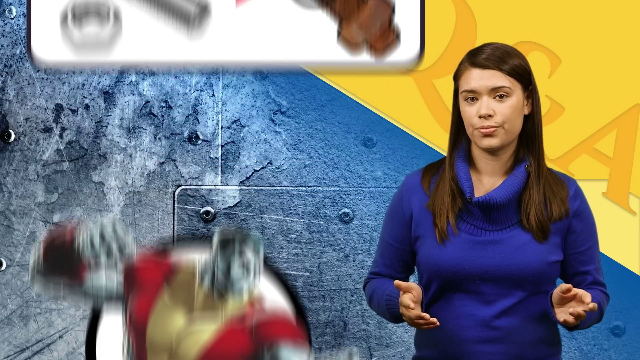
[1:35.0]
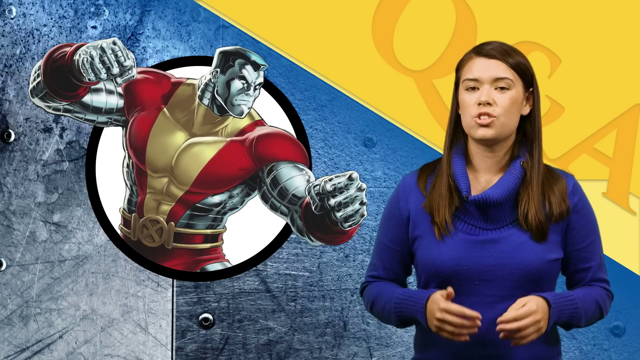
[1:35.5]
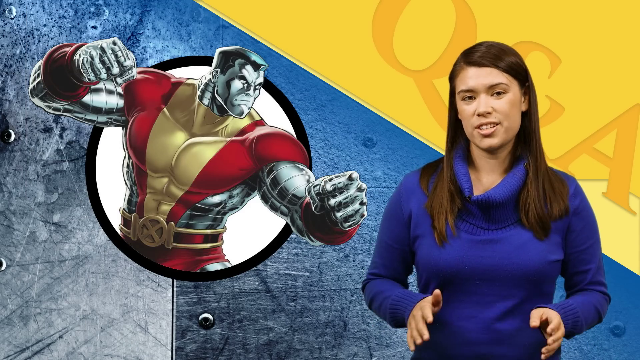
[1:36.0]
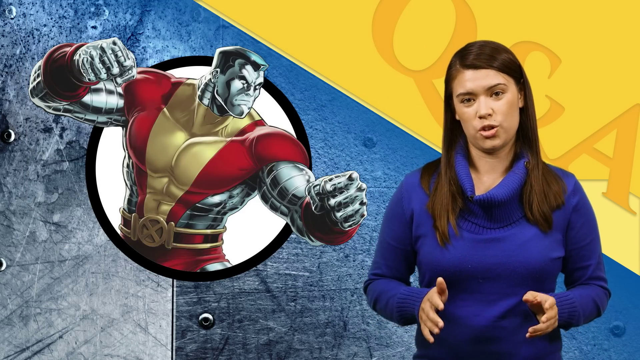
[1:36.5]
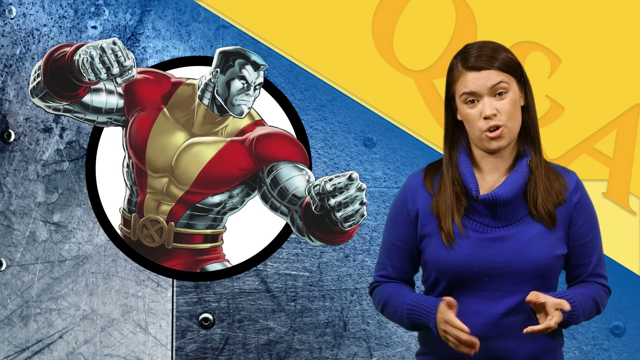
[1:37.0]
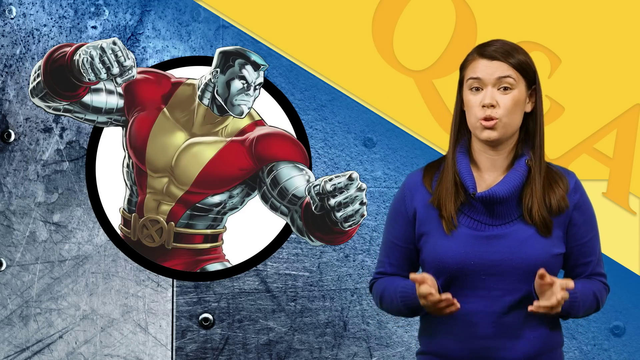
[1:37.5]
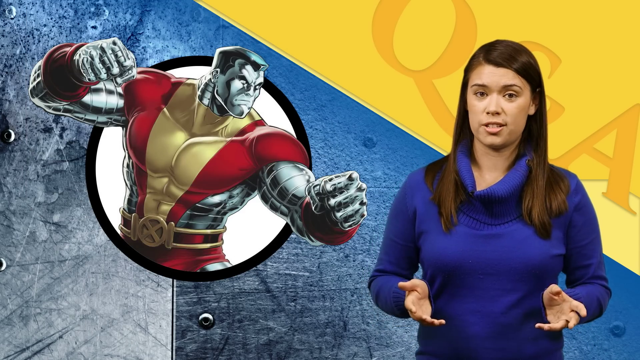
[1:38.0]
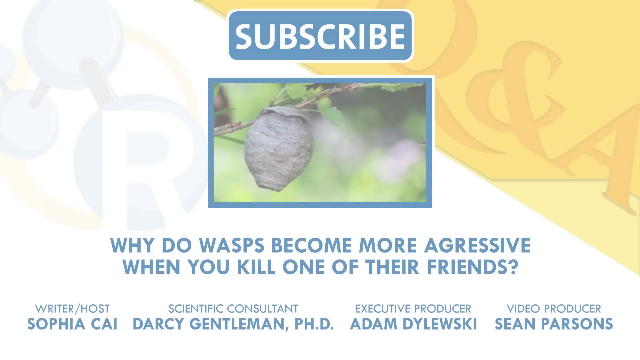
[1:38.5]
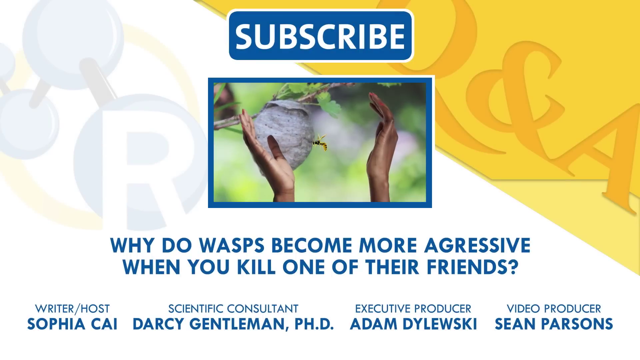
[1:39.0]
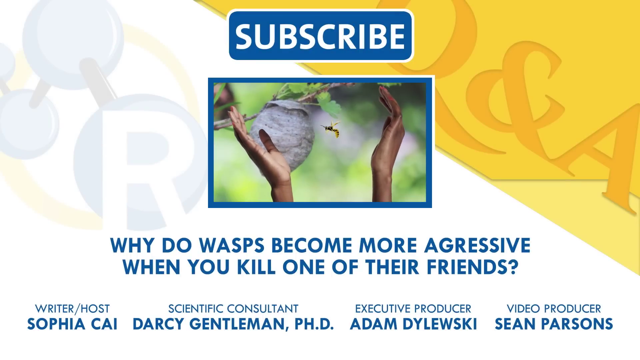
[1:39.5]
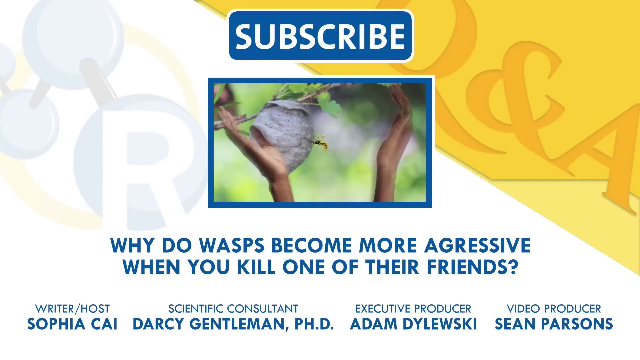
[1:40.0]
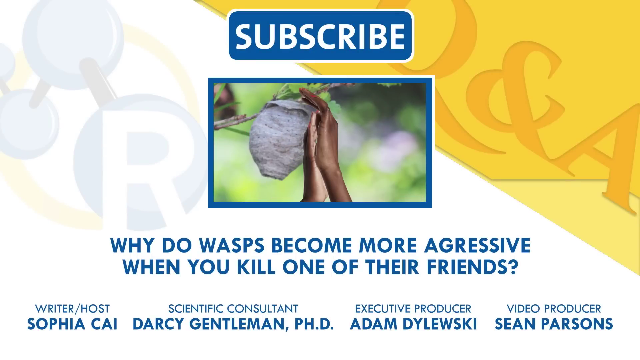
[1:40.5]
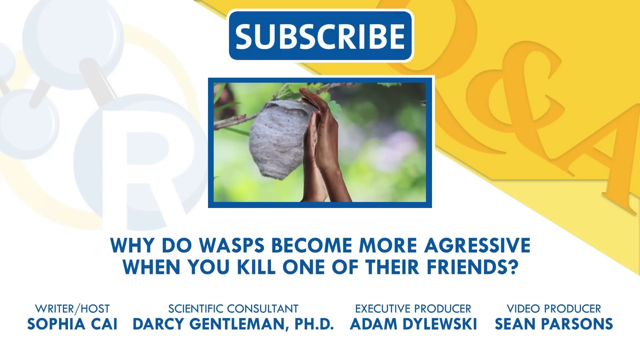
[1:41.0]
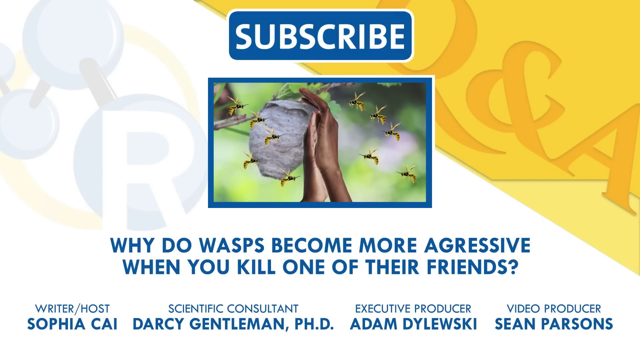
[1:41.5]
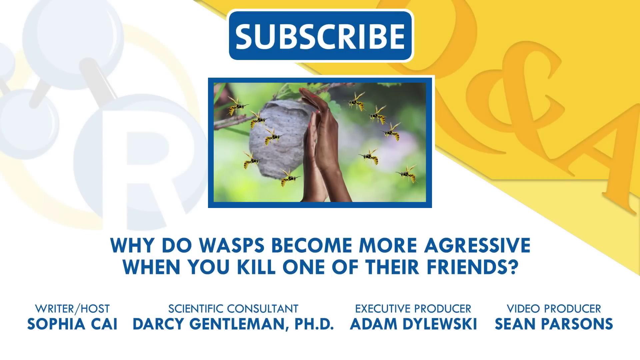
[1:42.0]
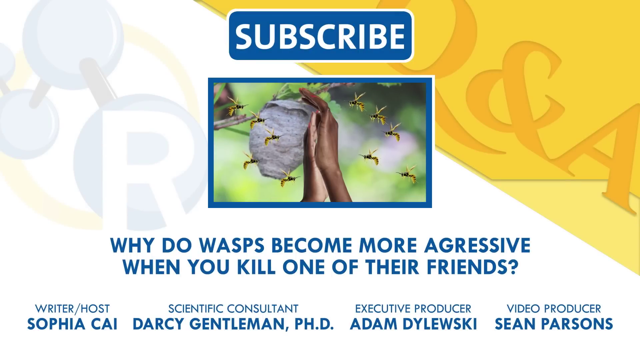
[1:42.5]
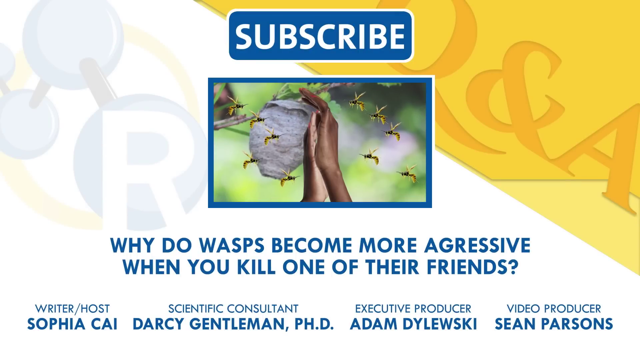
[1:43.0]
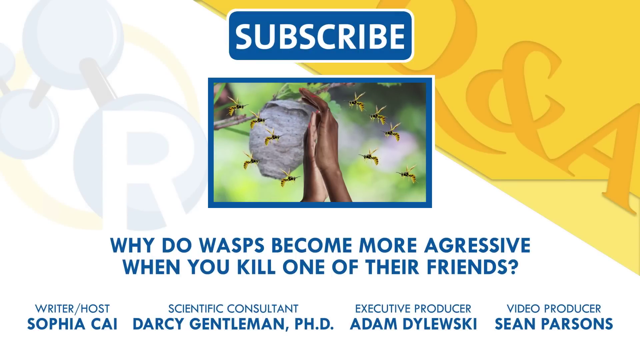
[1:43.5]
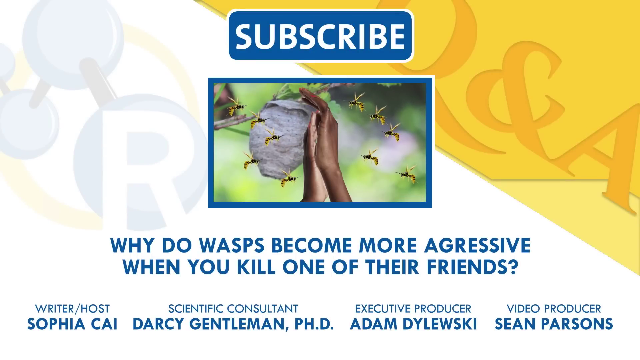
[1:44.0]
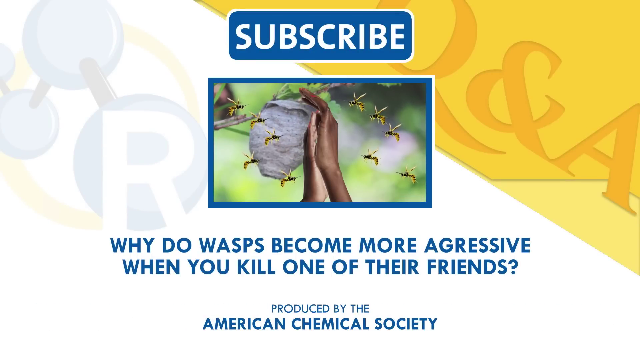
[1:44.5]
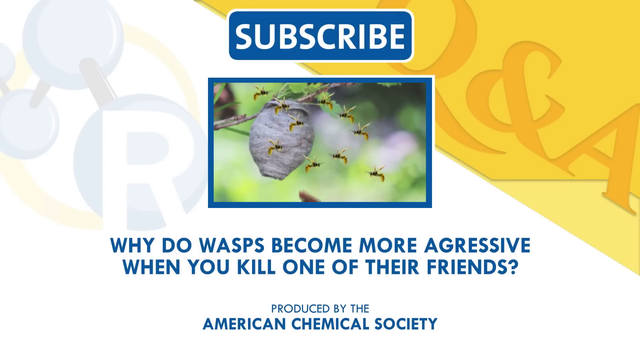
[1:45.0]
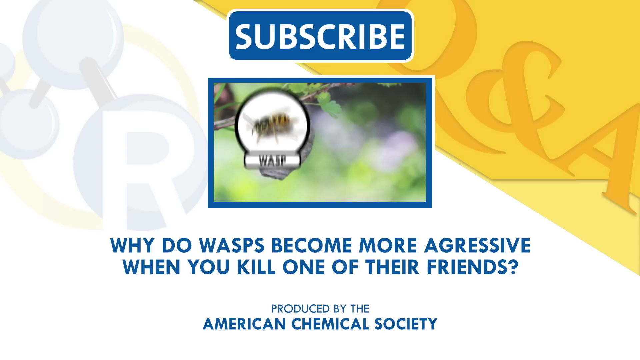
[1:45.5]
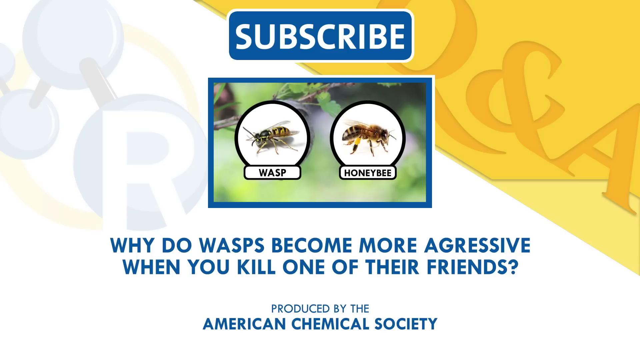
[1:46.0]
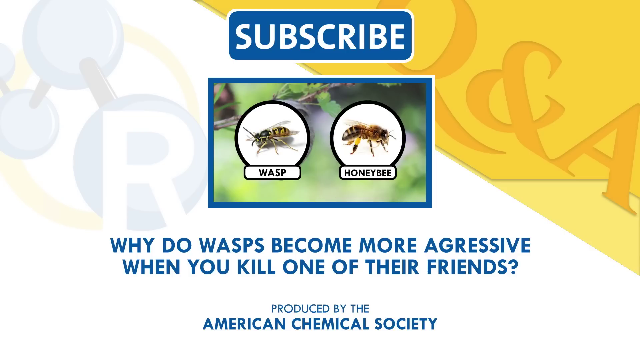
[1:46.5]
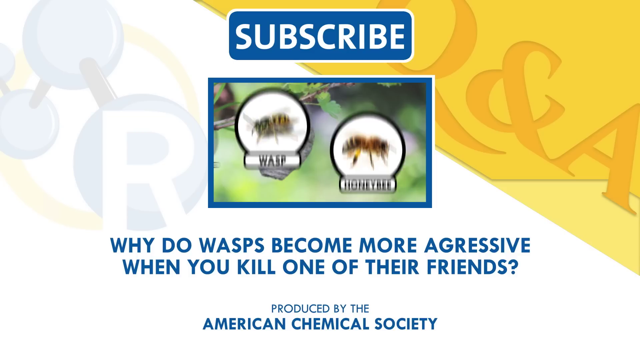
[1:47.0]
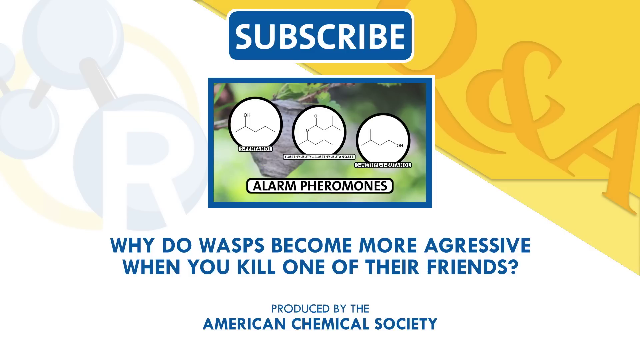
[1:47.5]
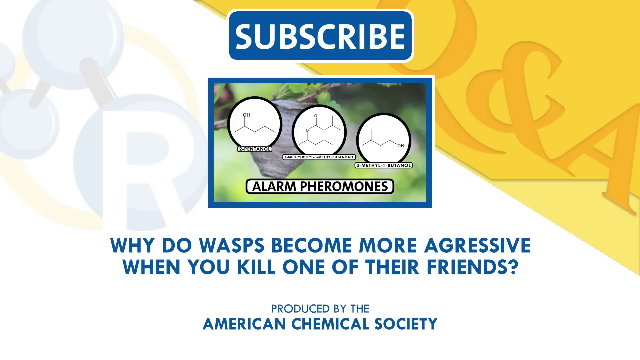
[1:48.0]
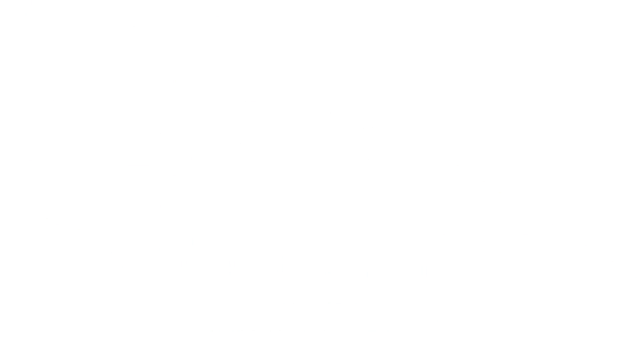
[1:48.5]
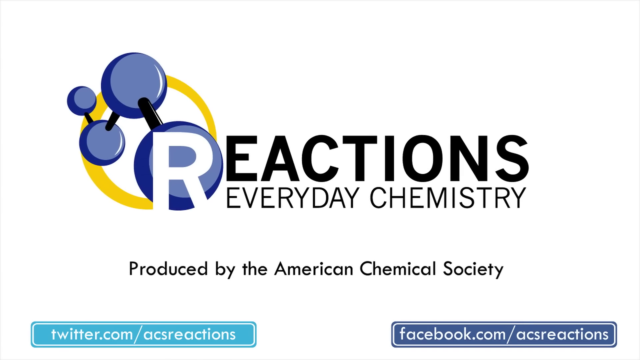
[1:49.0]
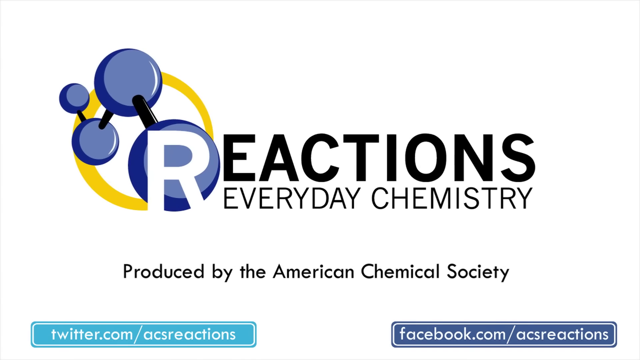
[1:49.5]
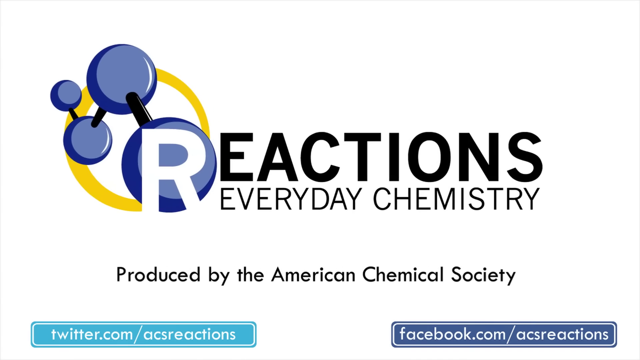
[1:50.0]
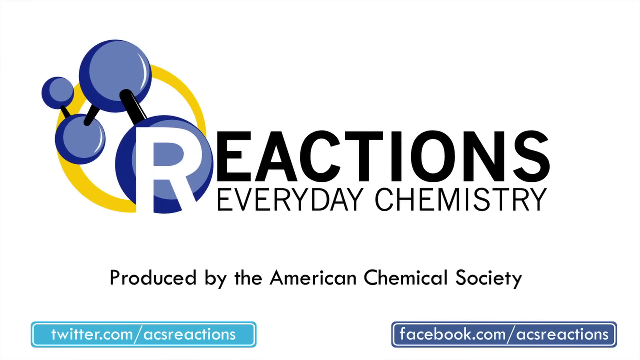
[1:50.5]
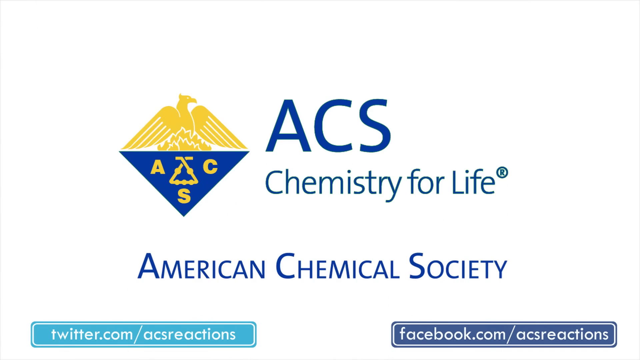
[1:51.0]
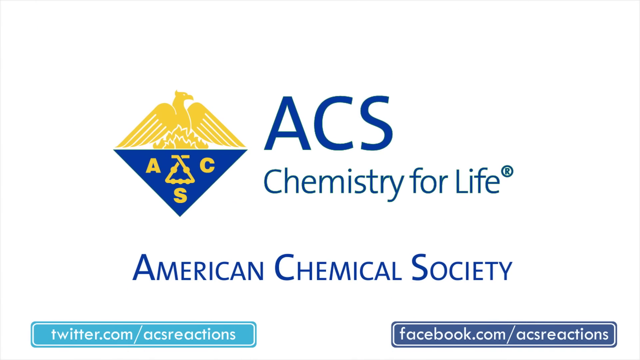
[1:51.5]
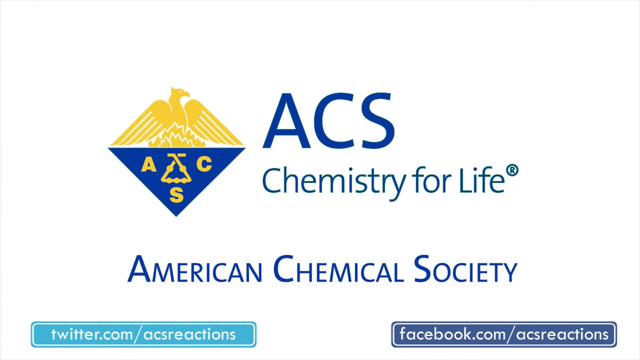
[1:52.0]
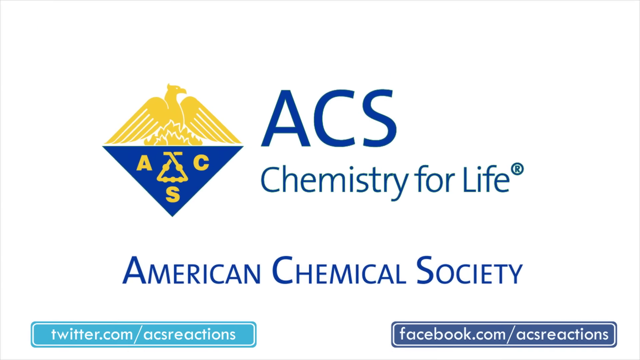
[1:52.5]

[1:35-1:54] Sophia appears with a cartoon character next to her. A subscribe page shows "Reactions", "Everyday Chemicals" and "ACS Chemistry for Life". While Sophia speaks, the character appears: a superhero-type character wearing a sort of red and gold suit, with a red and gold belt with an X on it. He makes fists with his left and right hands, his body seems to be silver, and he has black hair. A white background says "Iron", produced by the American Chemical Society, ACS Chemistry for Life, with a logo that is blue and yellow. A white background says "IR", probably for Iron, and a Q&A is on the yellow part. There is a logo that is gold on top and blue on the bottom.